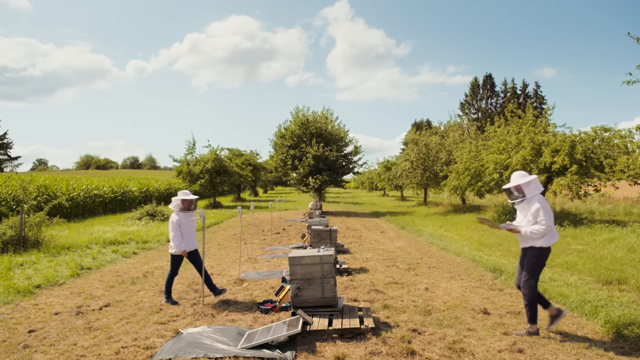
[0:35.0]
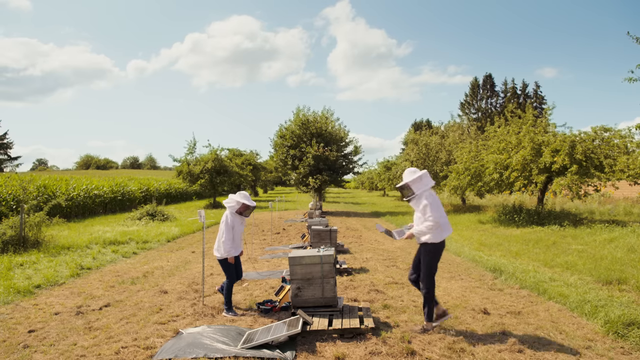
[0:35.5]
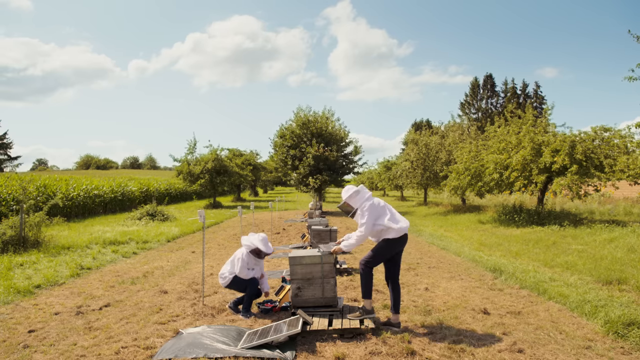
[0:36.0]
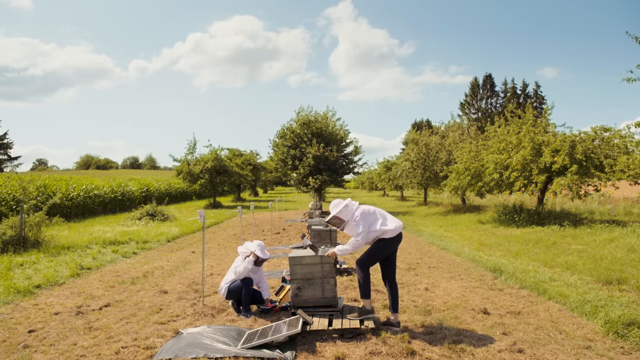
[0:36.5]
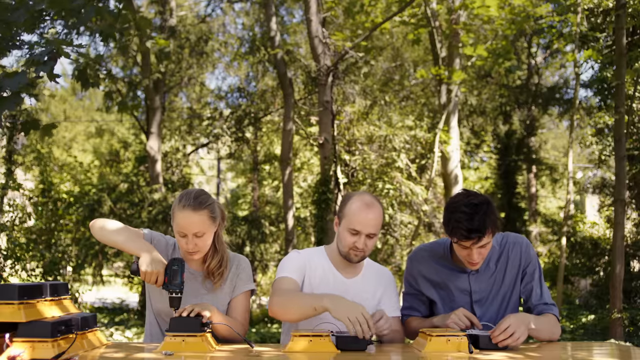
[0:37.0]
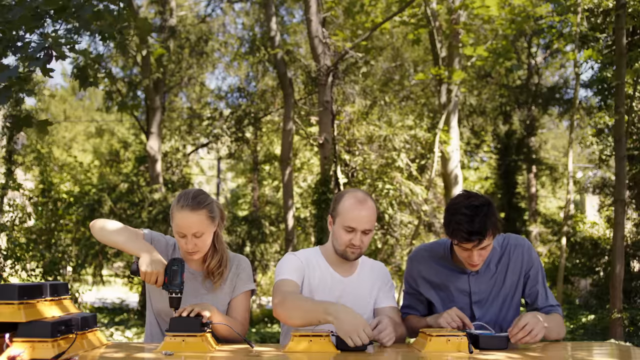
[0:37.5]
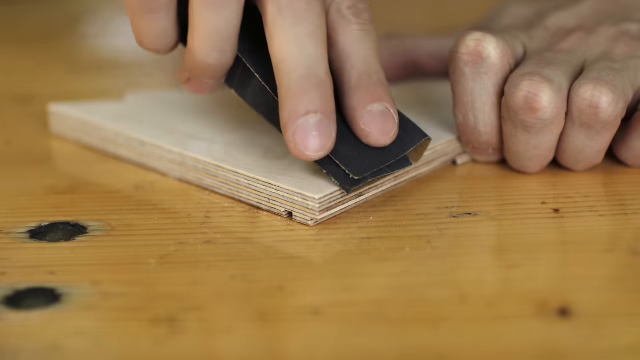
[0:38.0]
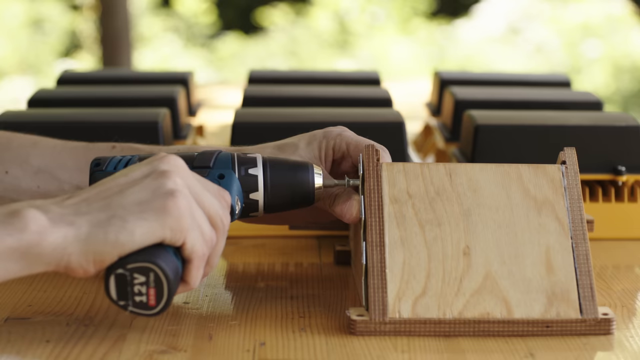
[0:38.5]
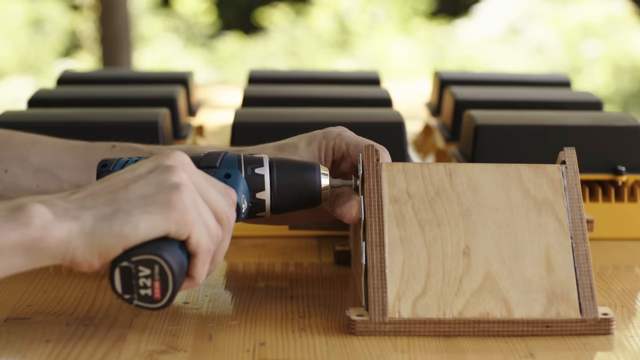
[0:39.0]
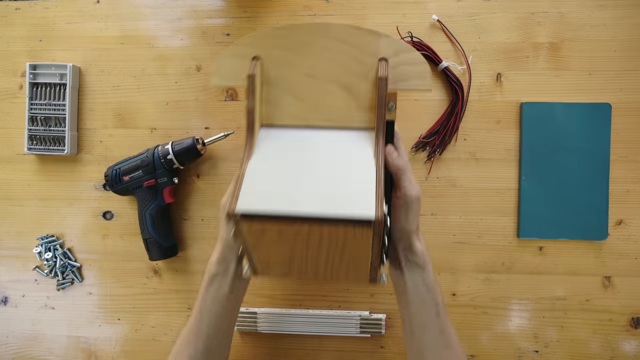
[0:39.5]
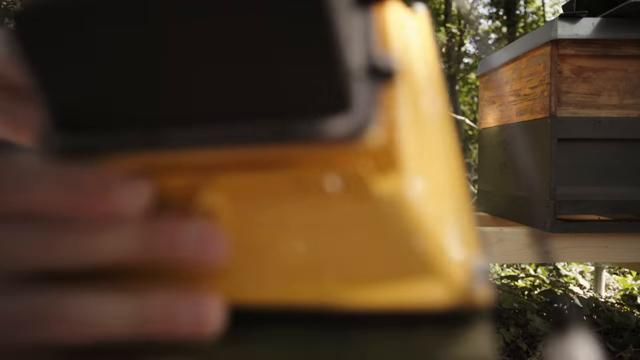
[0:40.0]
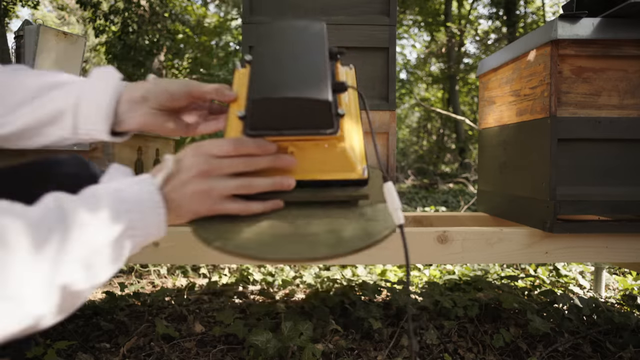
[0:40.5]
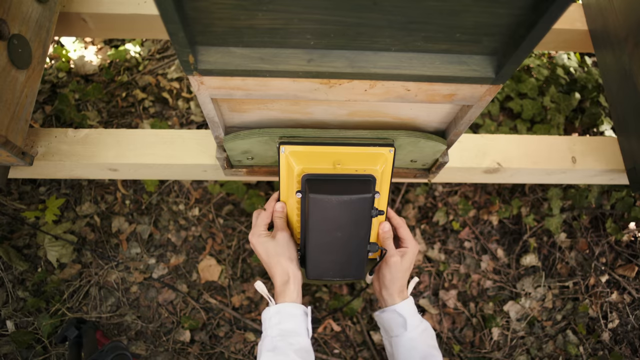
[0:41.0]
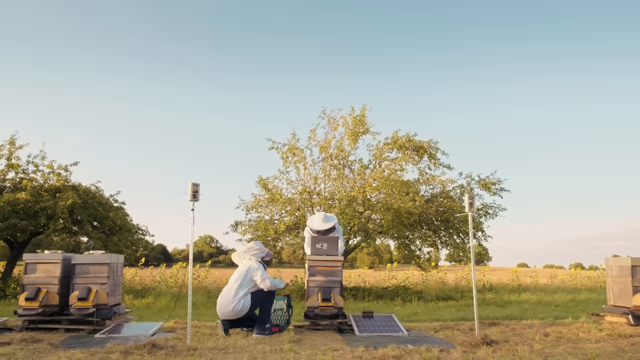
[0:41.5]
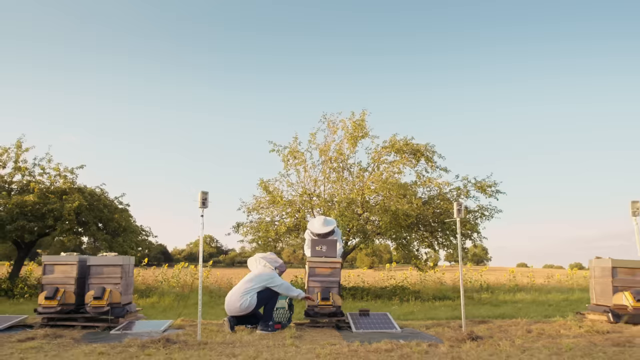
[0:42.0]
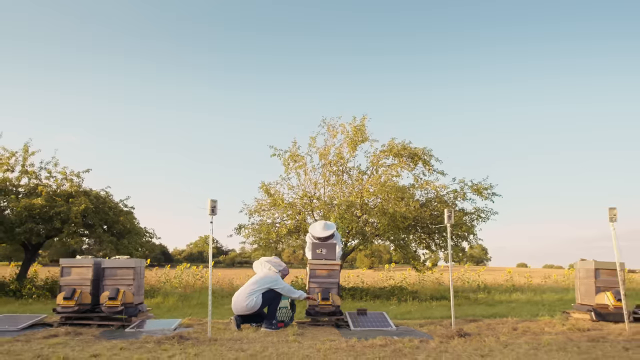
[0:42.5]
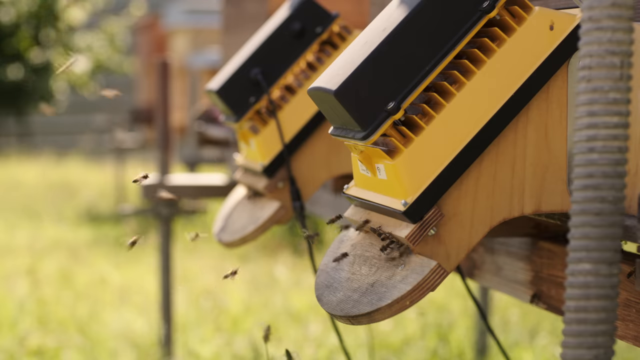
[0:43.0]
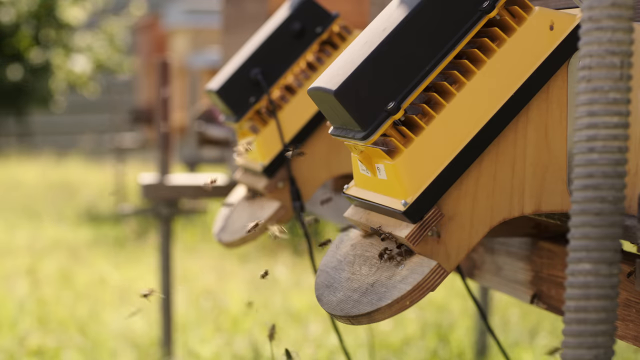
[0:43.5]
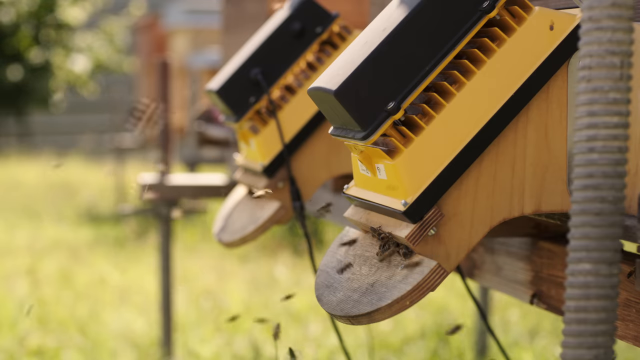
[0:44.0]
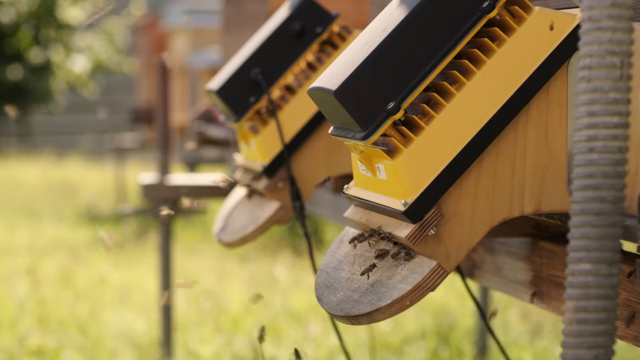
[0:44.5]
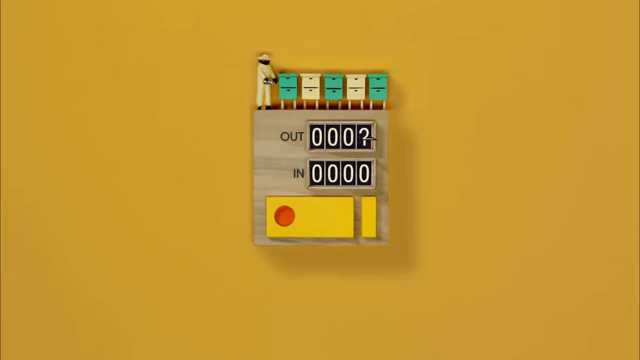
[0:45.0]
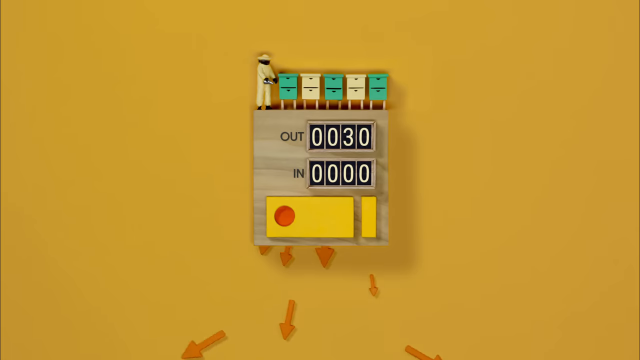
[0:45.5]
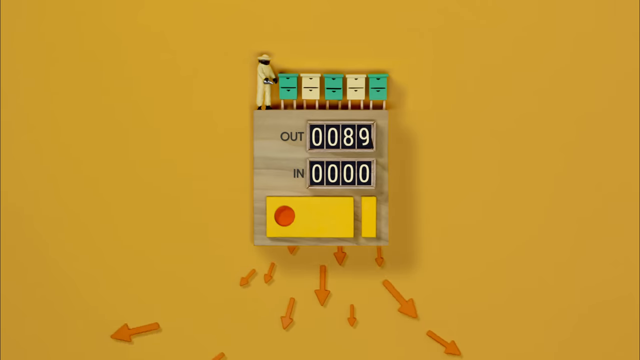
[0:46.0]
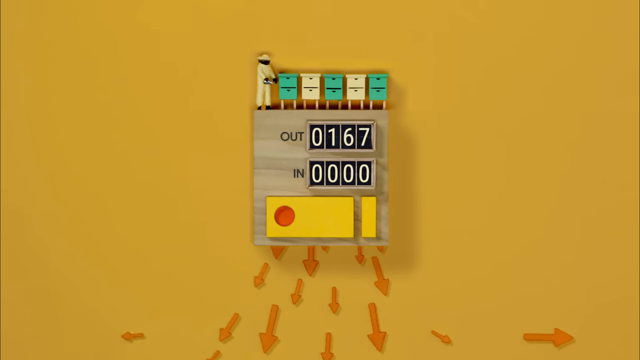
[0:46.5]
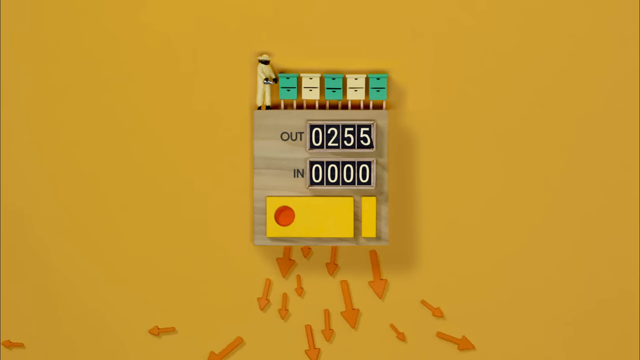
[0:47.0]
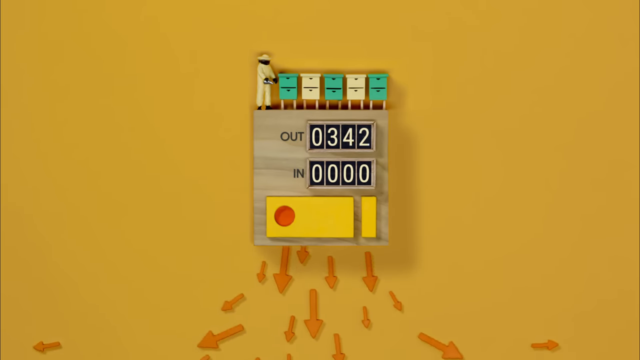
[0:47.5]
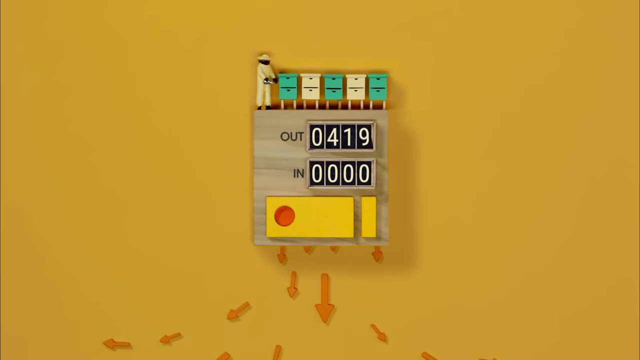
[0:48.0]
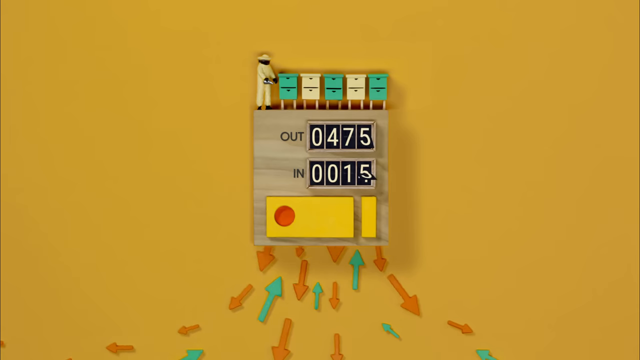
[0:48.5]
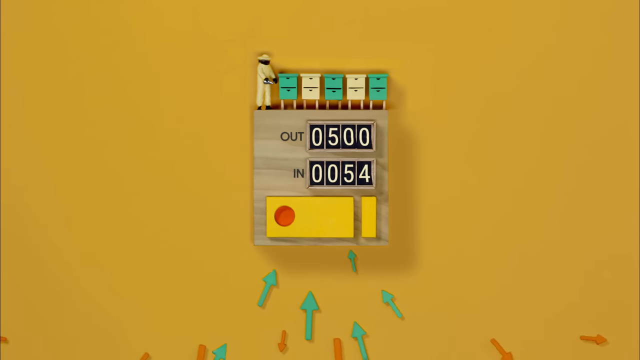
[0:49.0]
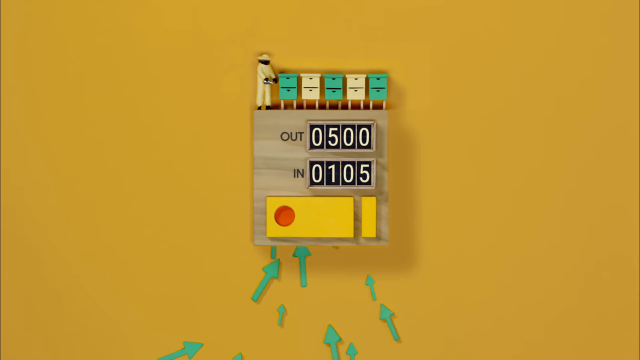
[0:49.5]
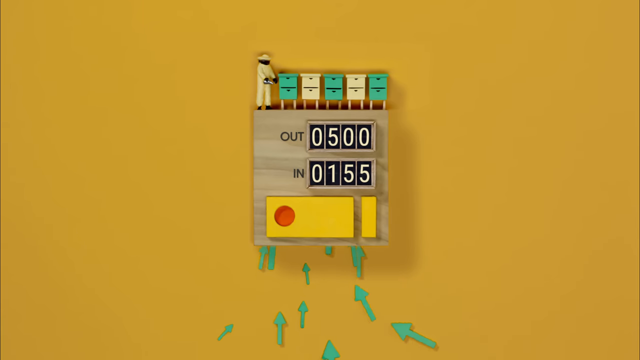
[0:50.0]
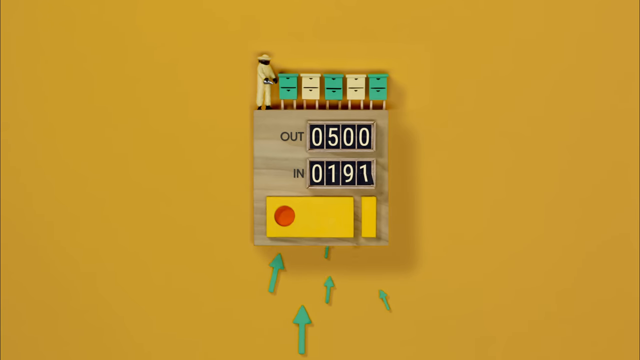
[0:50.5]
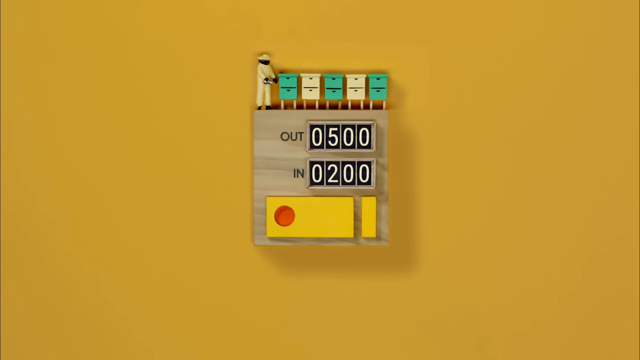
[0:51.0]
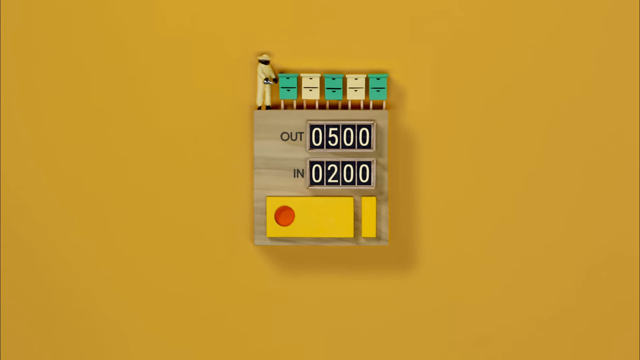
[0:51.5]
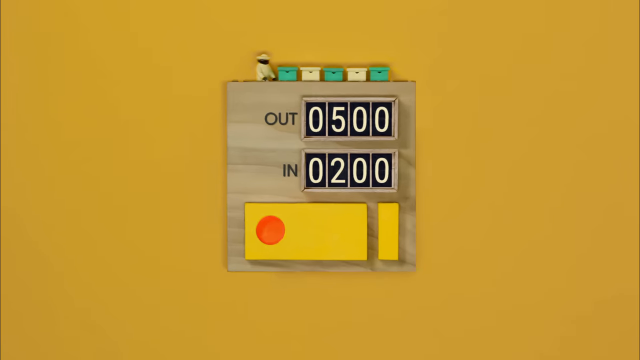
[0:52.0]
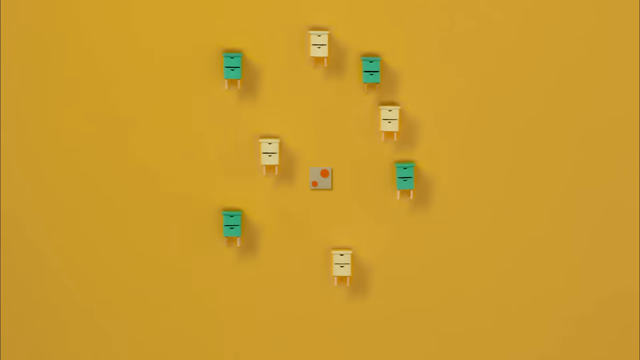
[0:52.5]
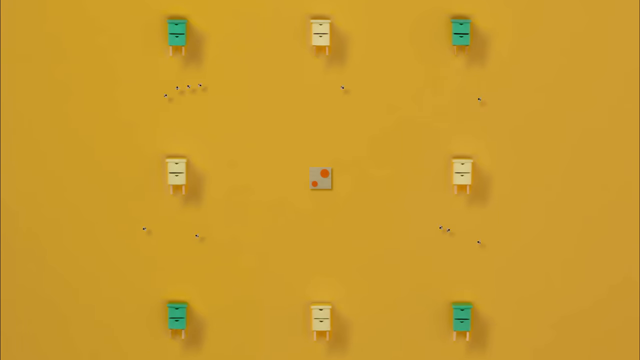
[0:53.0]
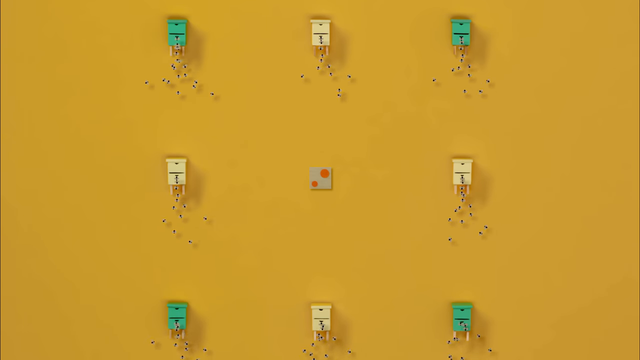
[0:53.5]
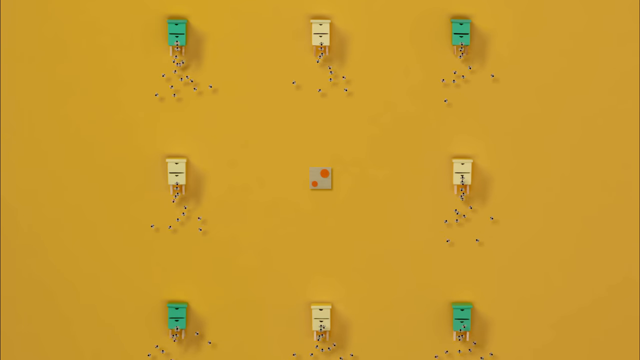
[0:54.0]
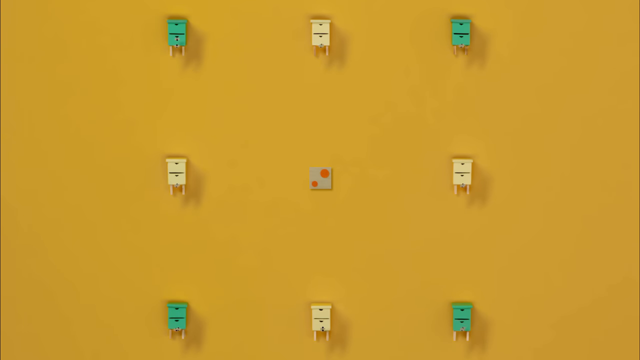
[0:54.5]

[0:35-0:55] Two people go to a hive, and then three people do some type of woodwork or carpentry, sanding and drilling some of the components of the beehive. The device looks like some type of machine that counts how many bees enter and exit the hive. A demonstration of the count shows out at 500 and in at 200, and the counting is demonstrated at a large scale across multiple hives to track the inbound and outbound numbers of honeybees.